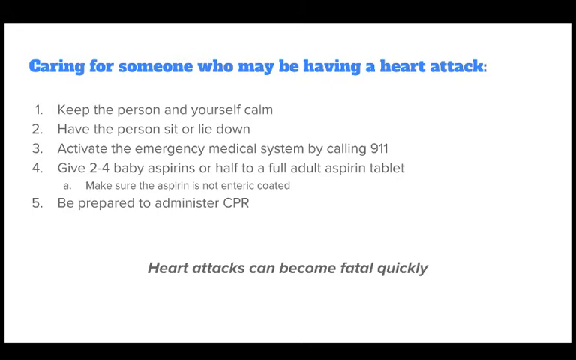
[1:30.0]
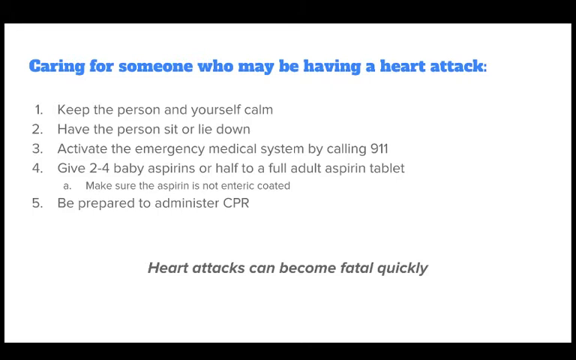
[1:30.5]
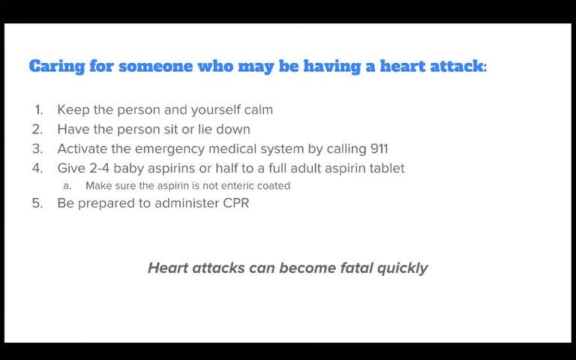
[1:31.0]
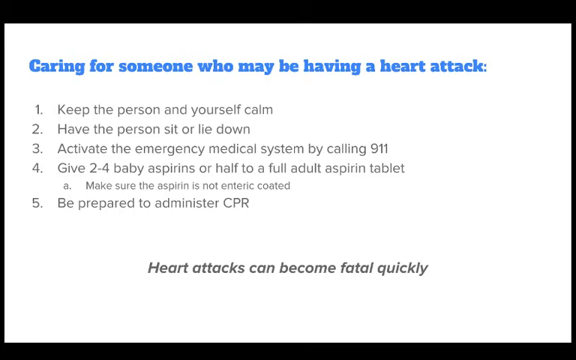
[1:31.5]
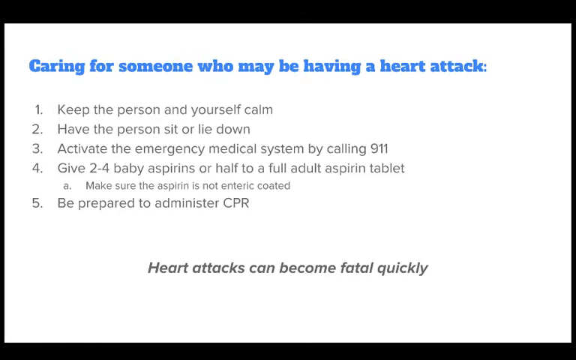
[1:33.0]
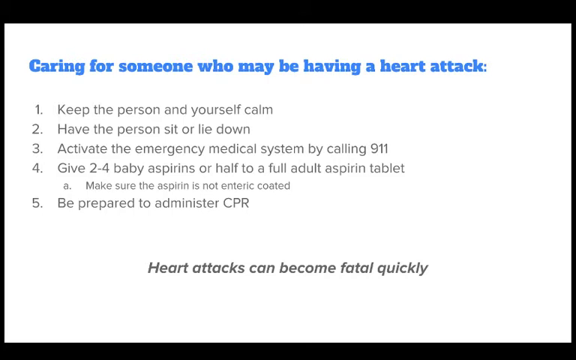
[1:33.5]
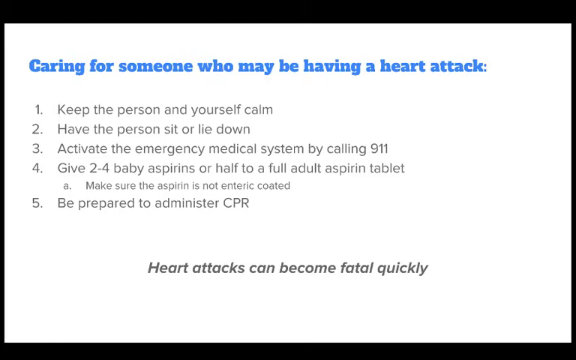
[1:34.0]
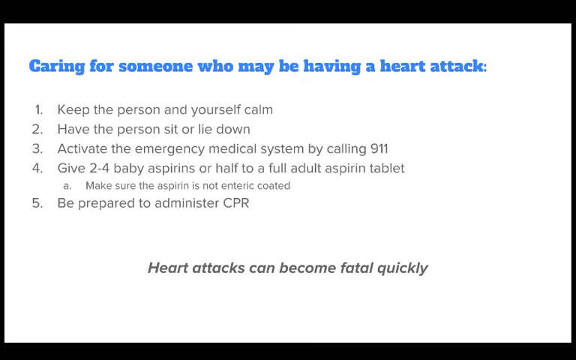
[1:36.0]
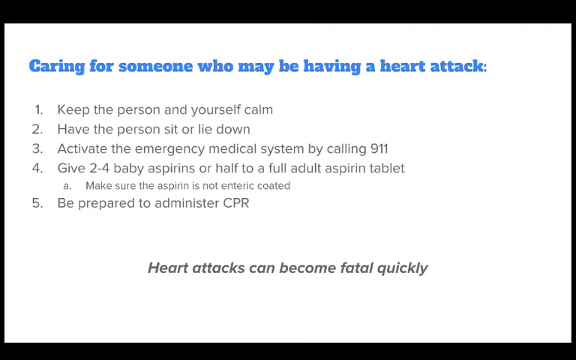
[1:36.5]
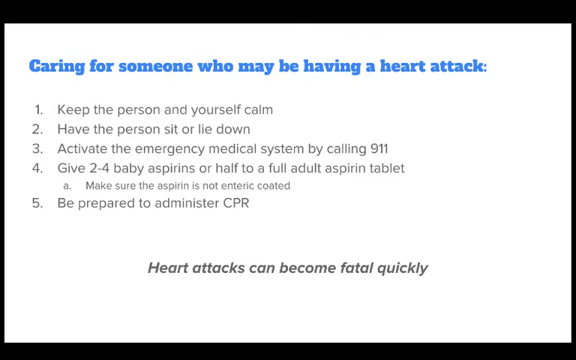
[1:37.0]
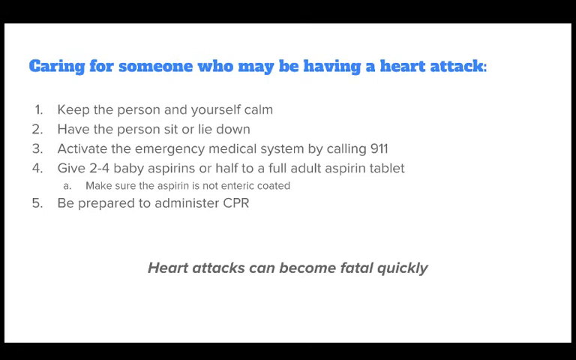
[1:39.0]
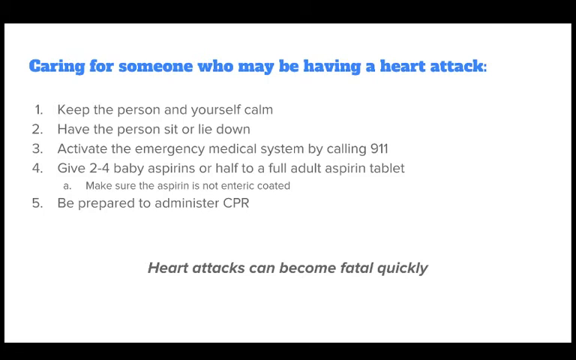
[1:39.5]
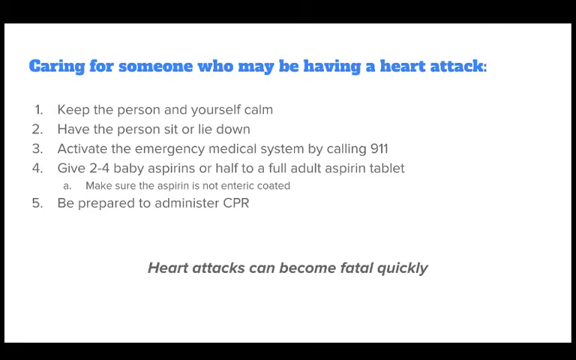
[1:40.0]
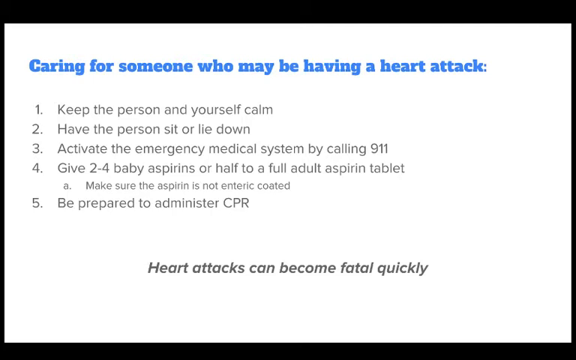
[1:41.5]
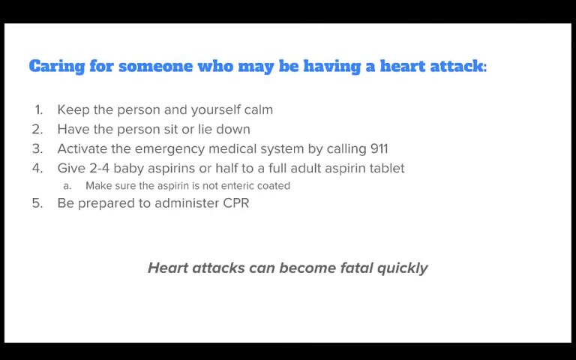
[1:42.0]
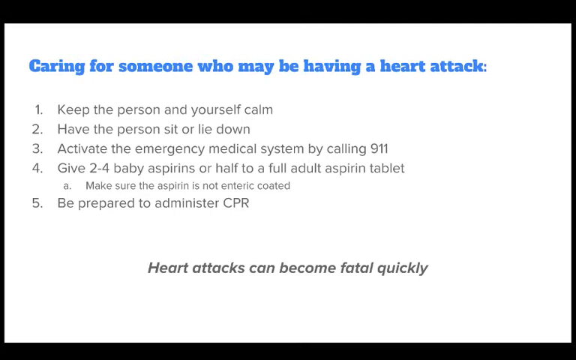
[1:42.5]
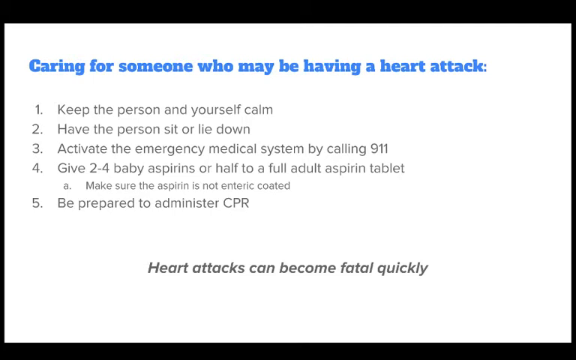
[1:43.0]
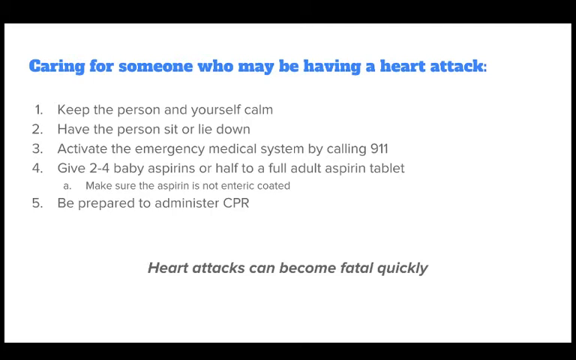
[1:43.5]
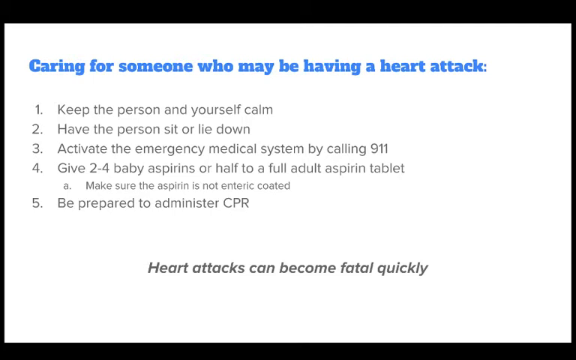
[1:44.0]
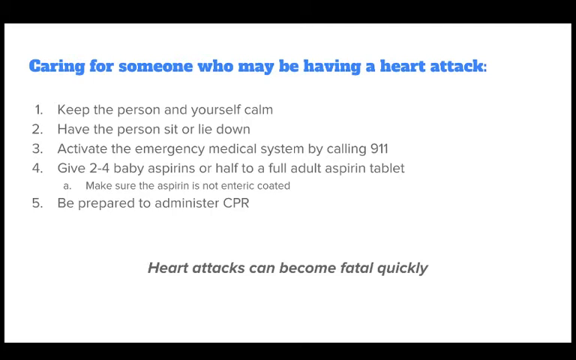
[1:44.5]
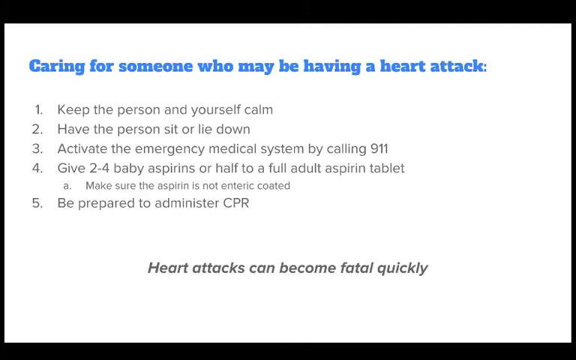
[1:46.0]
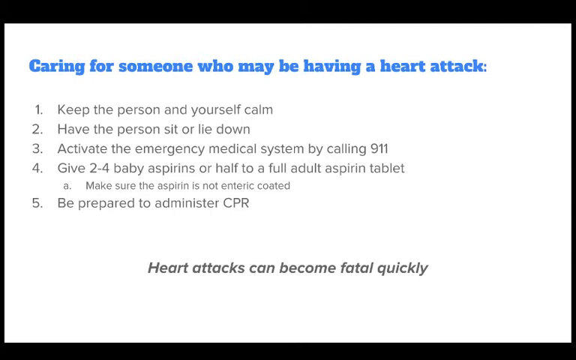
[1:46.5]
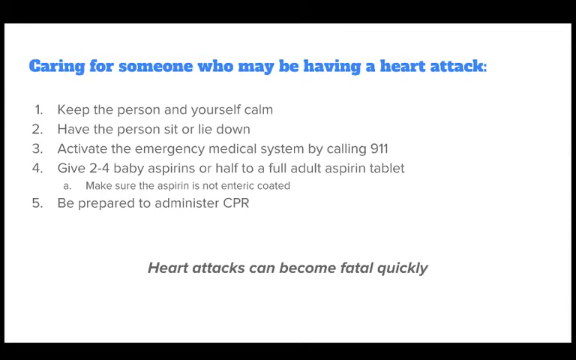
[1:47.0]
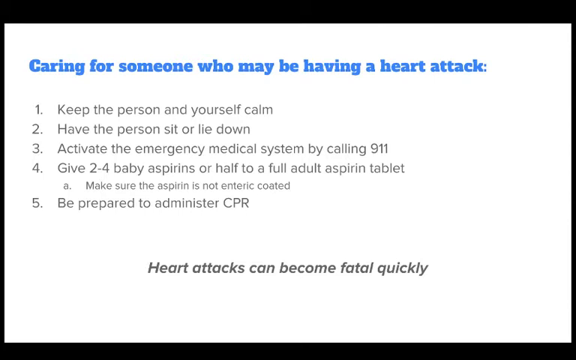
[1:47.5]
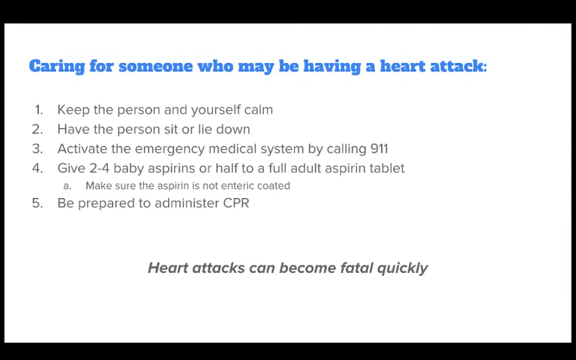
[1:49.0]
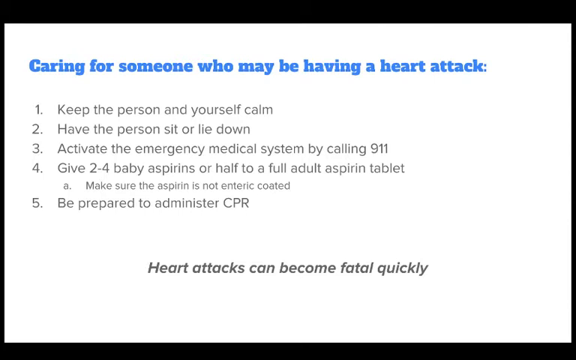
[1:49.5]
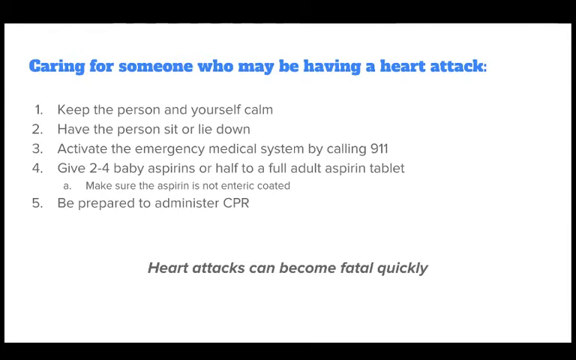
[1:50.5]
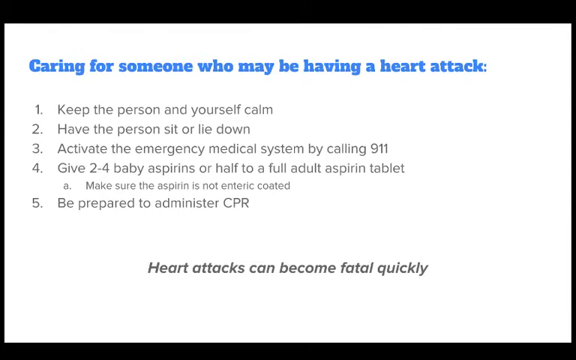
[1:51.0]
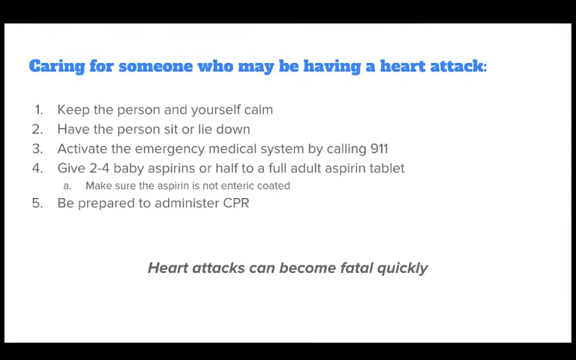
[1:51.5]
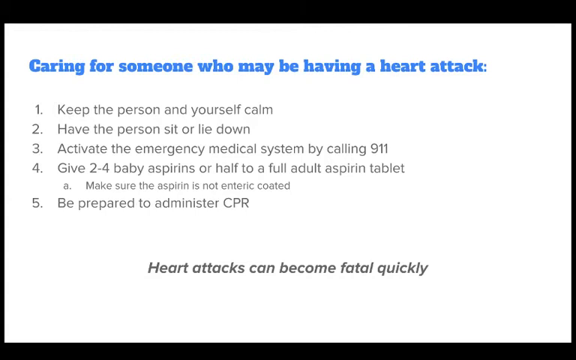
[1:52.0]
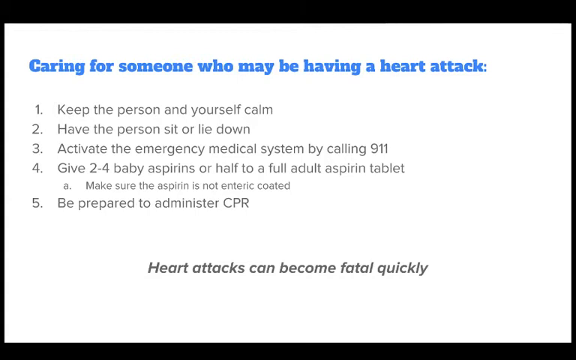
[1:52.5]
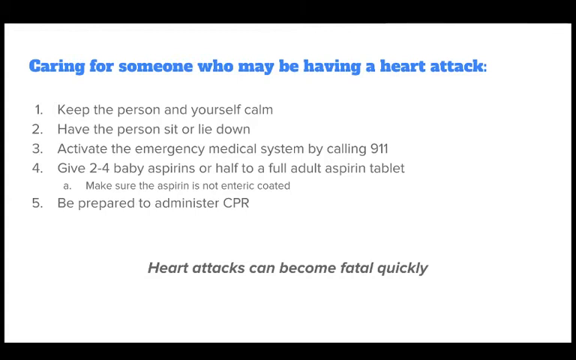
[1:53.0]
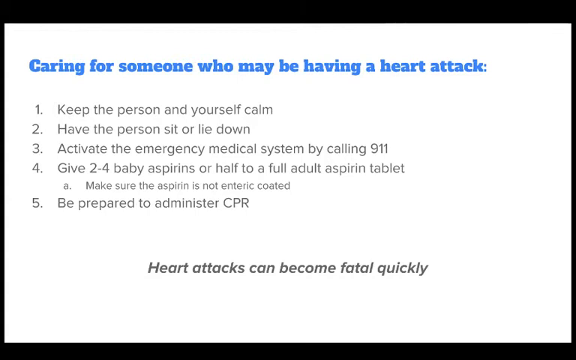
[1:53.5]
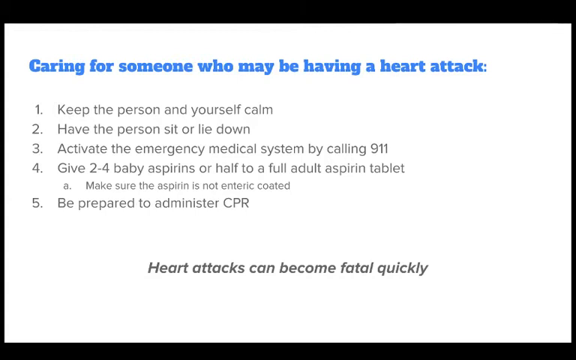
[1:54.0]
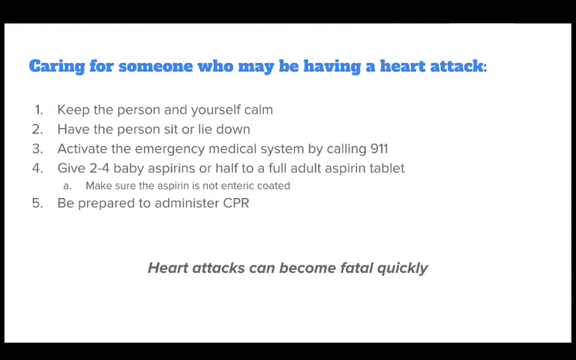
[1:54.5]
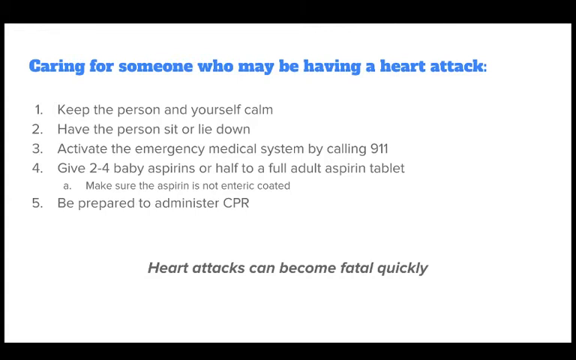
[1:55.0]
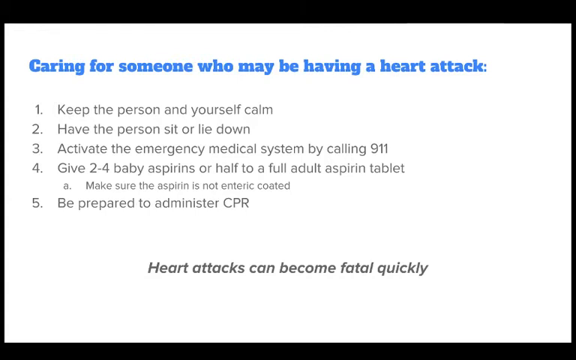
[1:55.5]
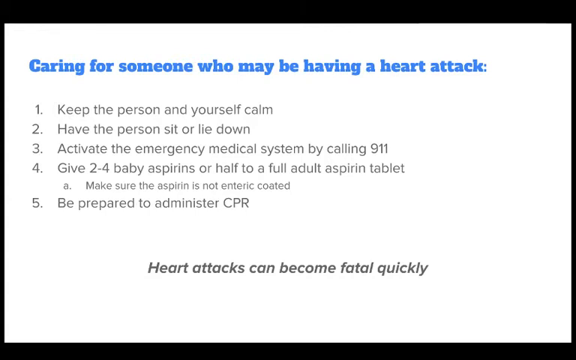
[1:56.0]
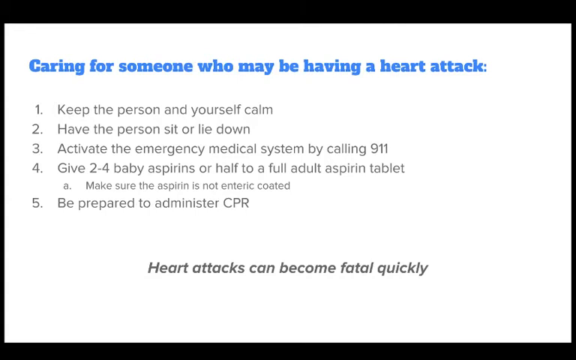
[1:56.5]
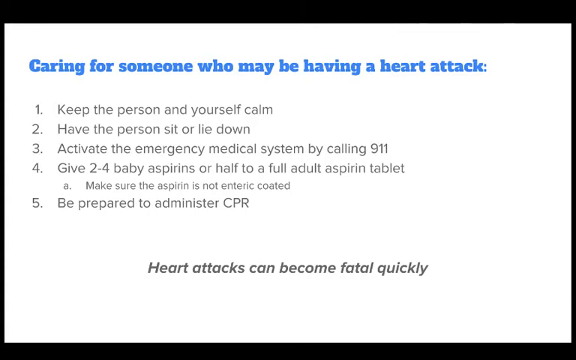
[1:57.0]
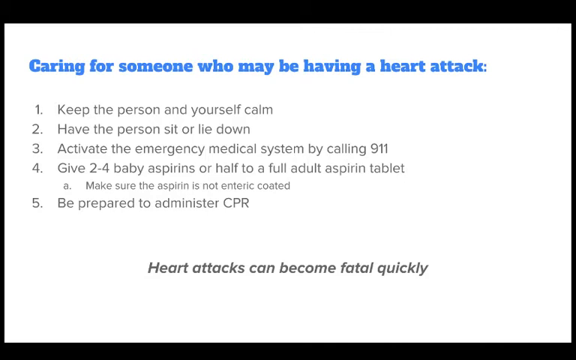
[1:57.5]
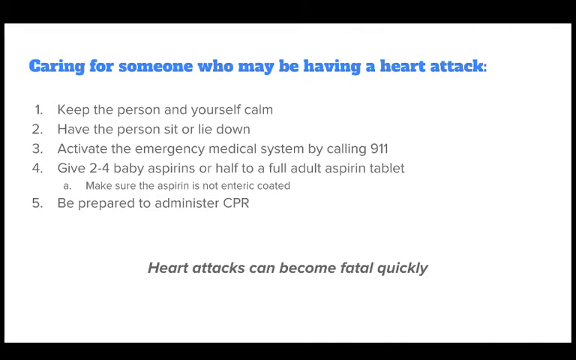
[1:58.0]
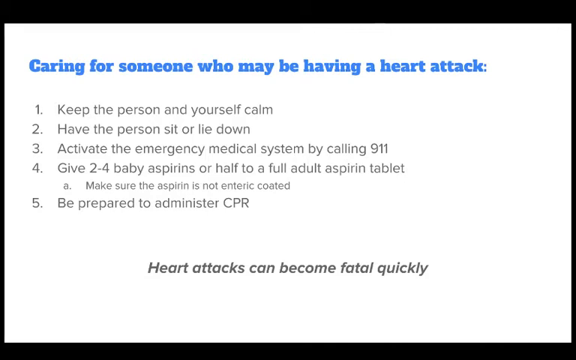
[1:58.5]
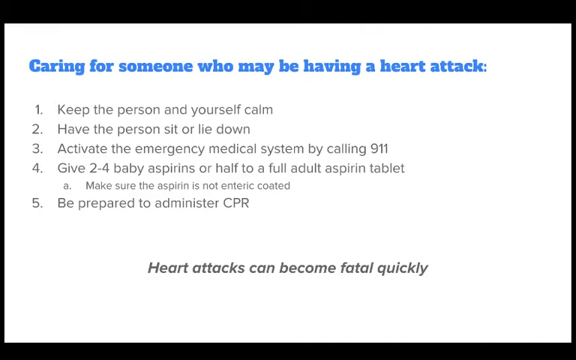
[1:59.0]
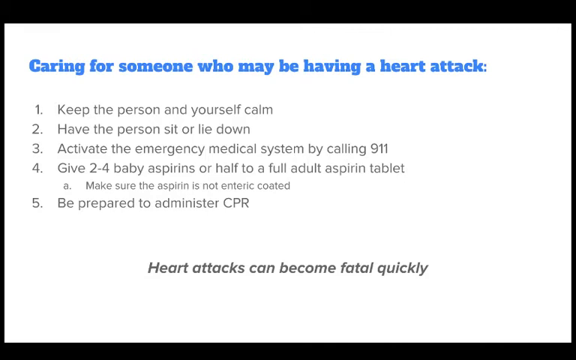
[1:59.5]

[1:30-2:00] The same white screen remains for the entire duration, with blue text at the top reading "Caring for someone who may be having a heart attack." Below it, grey numbered advice is listed vertically from 1 to 5: "One, keep the person and yourself calm. Two, have the person sit or lie down. Three, activate the emergency medical system by calling 911. Four, give two to four baby aspirins or half to a full adult aspirin tablet", with a subsection in slightly smaller text underneath reading "A, make sure the aspirin is not enteric coated", and "Five, be prepared to administer CPR." Thicker grey text centred towards the bottom of the screen says "heart attacks can become fatal quickly."